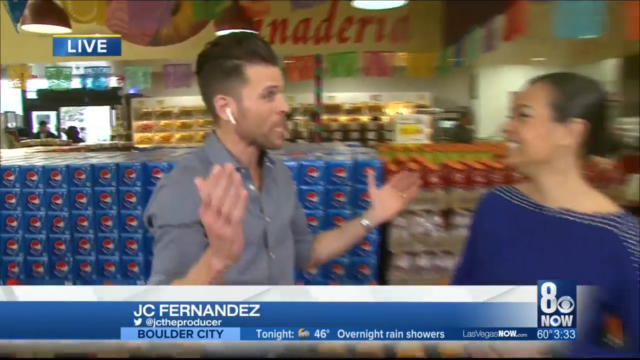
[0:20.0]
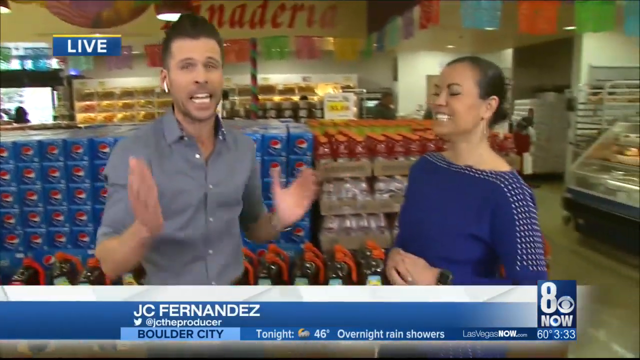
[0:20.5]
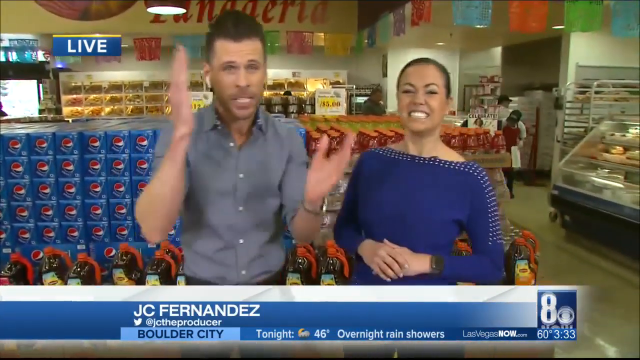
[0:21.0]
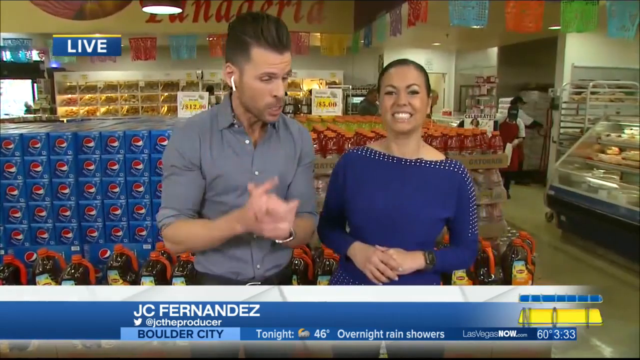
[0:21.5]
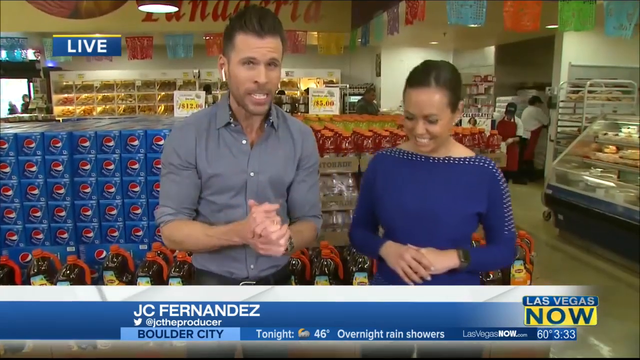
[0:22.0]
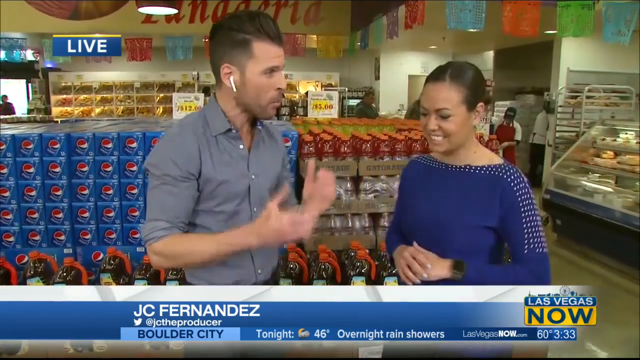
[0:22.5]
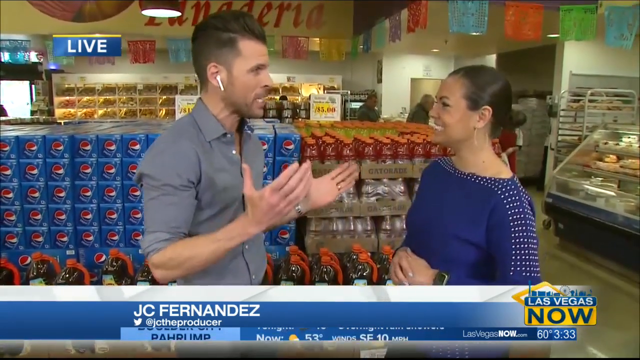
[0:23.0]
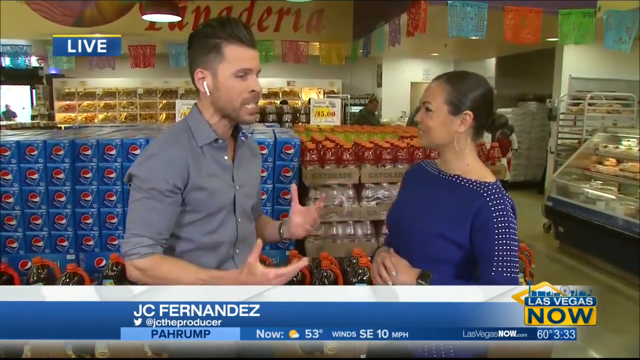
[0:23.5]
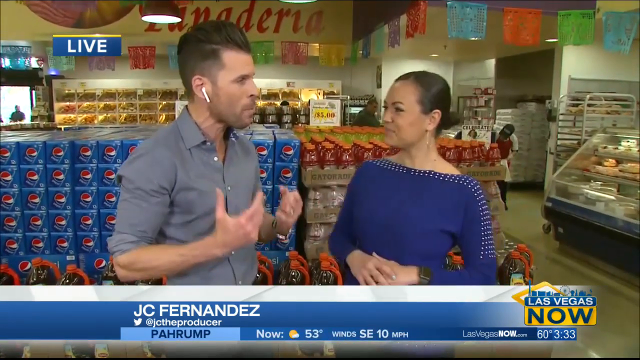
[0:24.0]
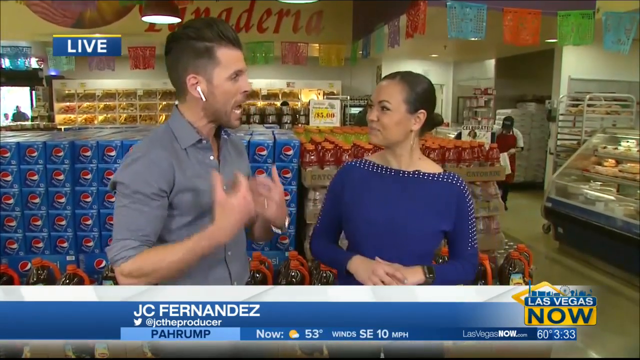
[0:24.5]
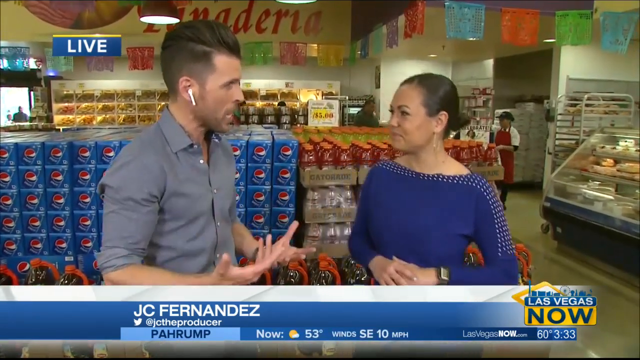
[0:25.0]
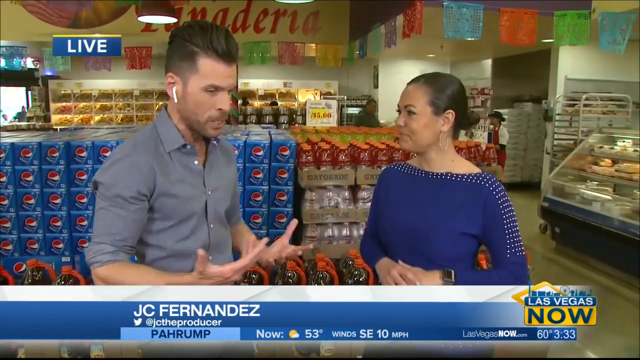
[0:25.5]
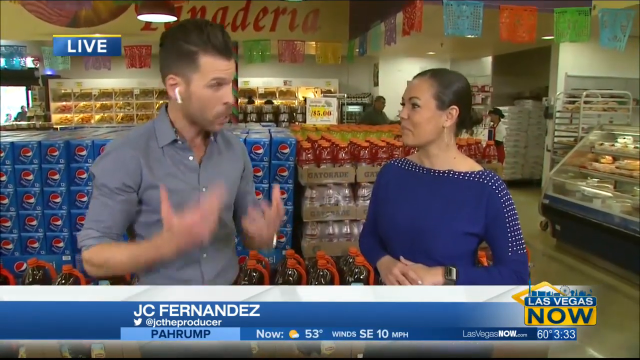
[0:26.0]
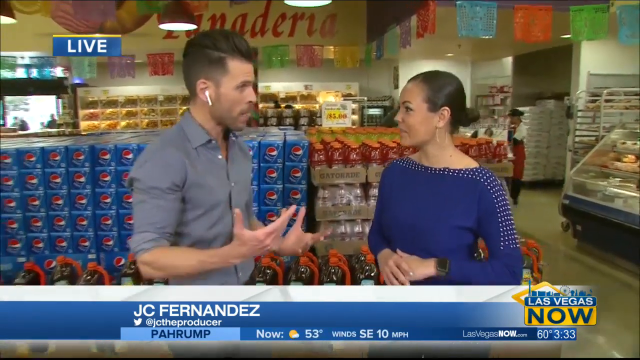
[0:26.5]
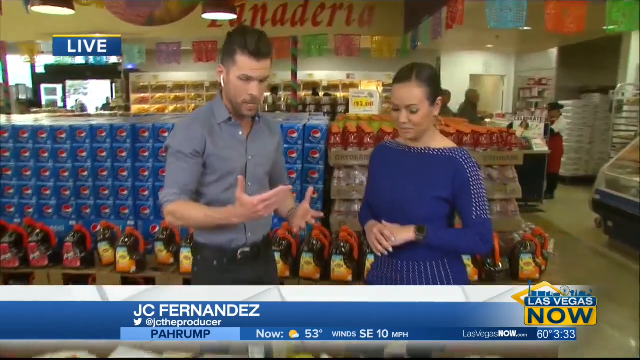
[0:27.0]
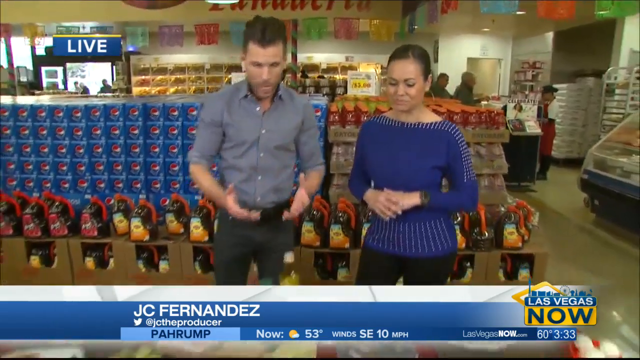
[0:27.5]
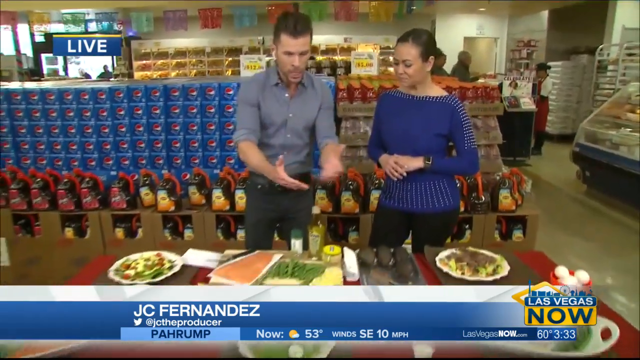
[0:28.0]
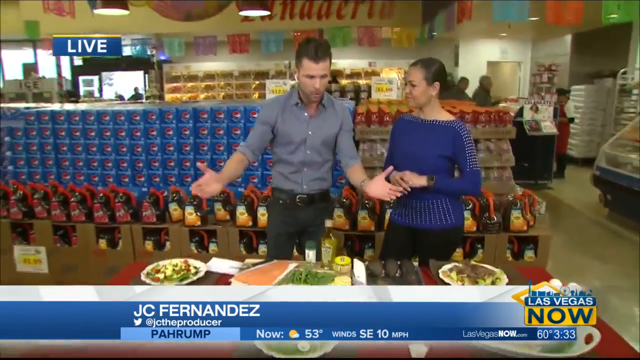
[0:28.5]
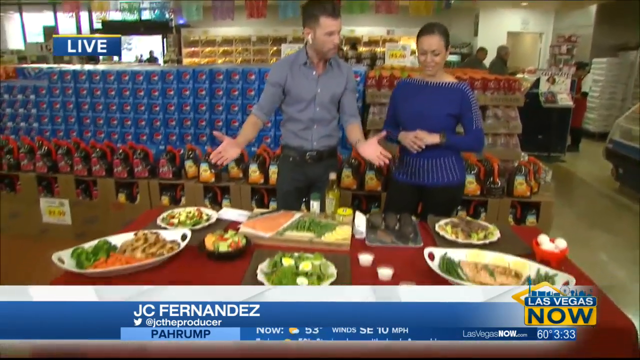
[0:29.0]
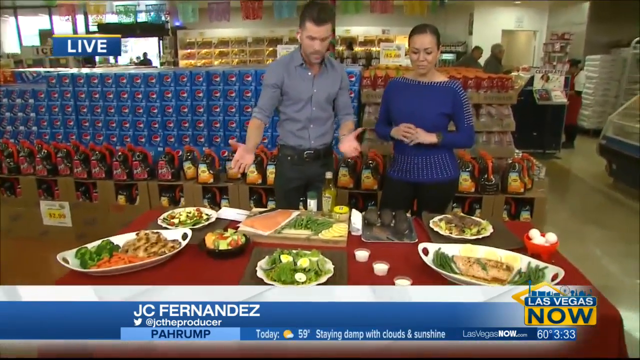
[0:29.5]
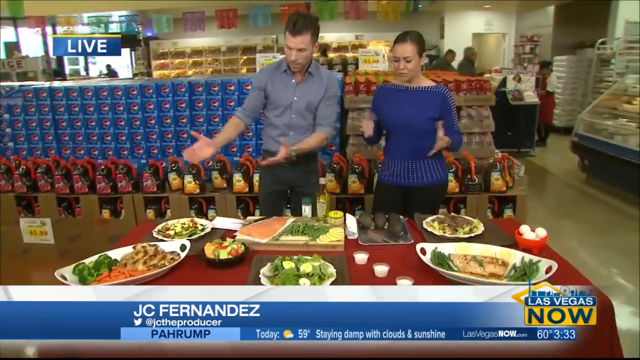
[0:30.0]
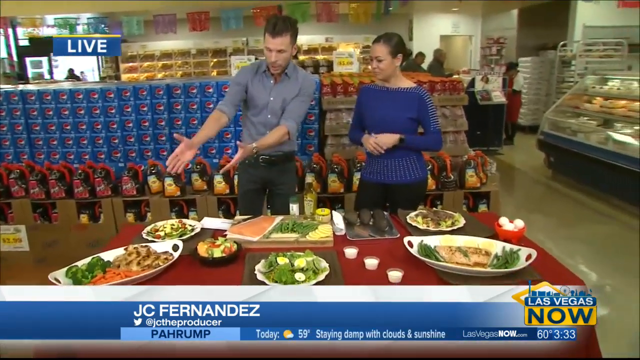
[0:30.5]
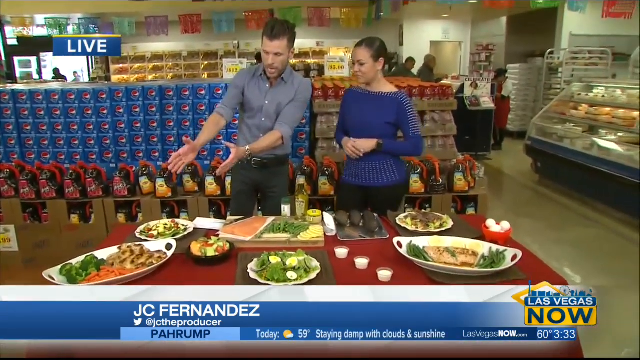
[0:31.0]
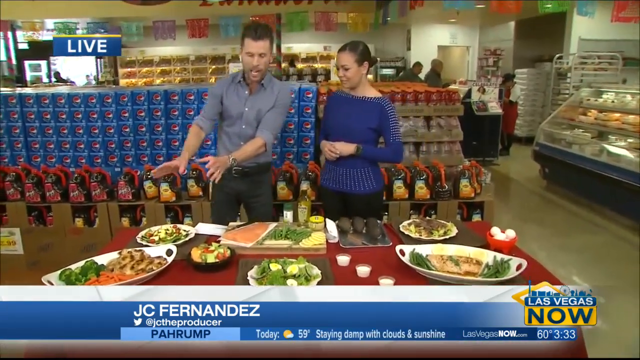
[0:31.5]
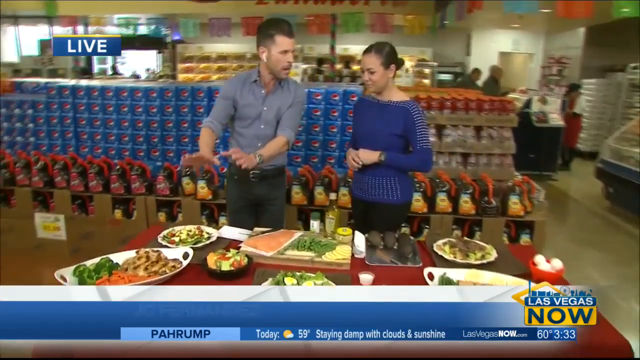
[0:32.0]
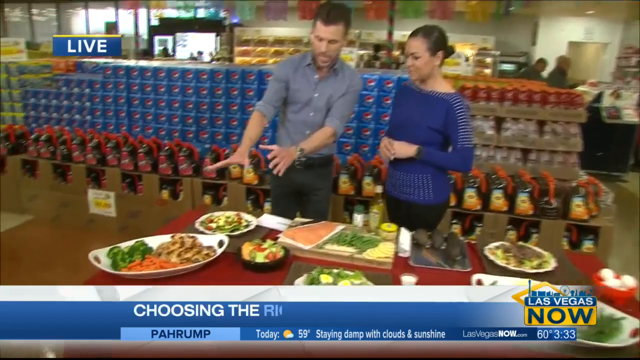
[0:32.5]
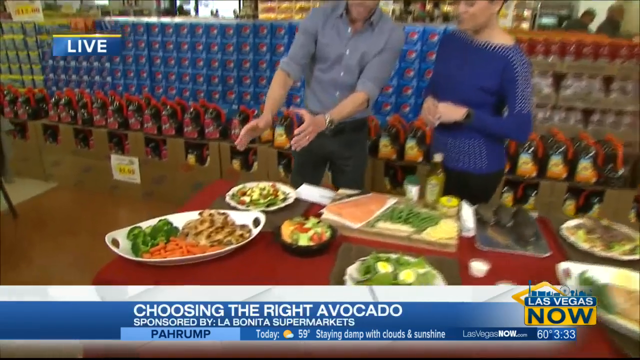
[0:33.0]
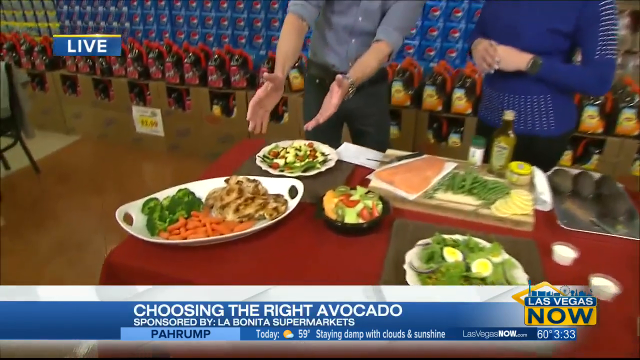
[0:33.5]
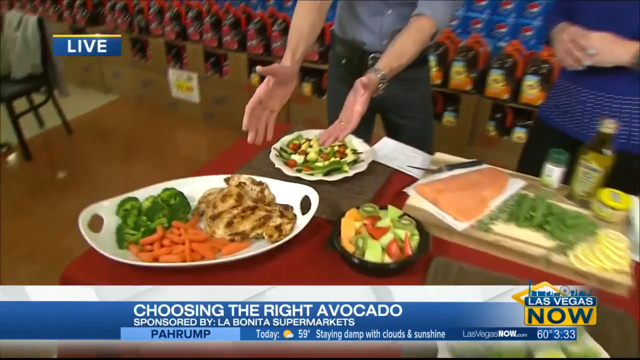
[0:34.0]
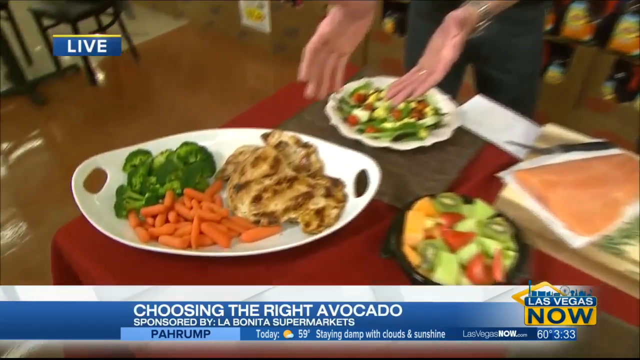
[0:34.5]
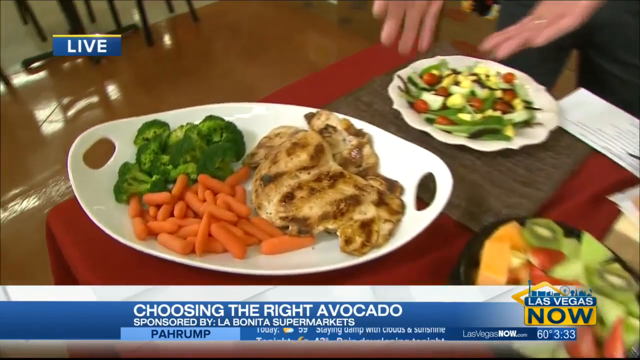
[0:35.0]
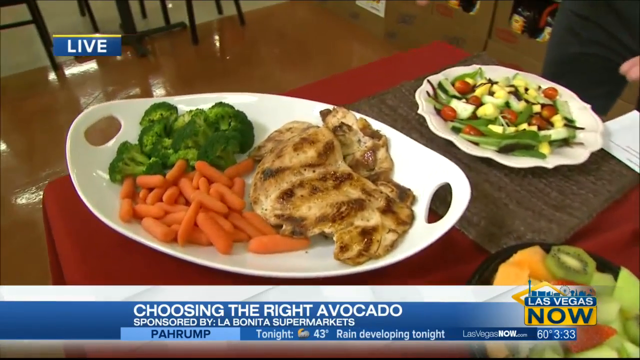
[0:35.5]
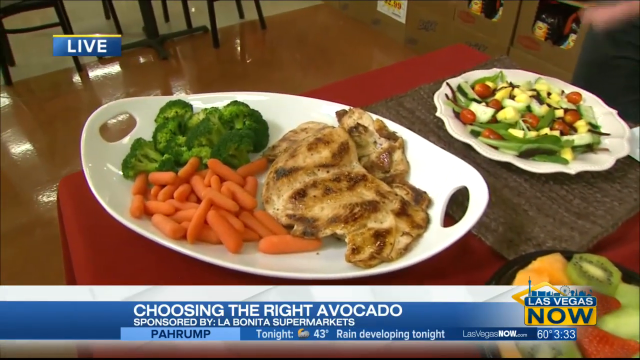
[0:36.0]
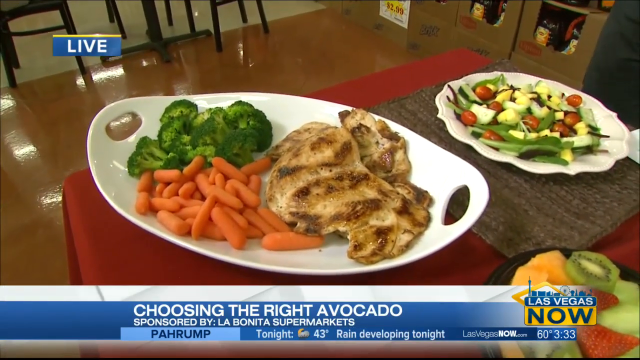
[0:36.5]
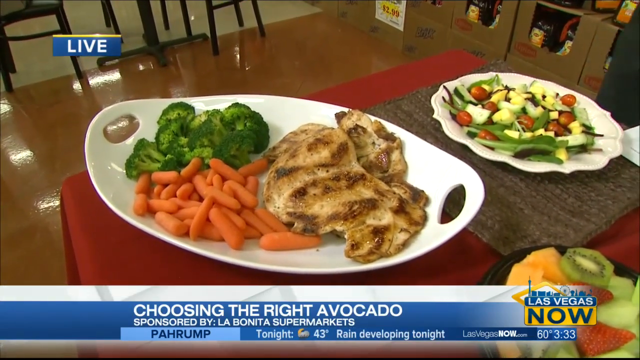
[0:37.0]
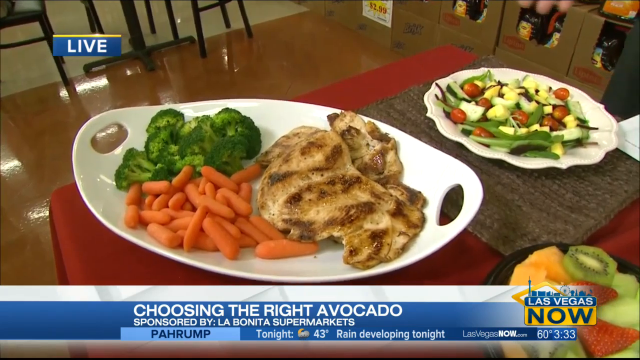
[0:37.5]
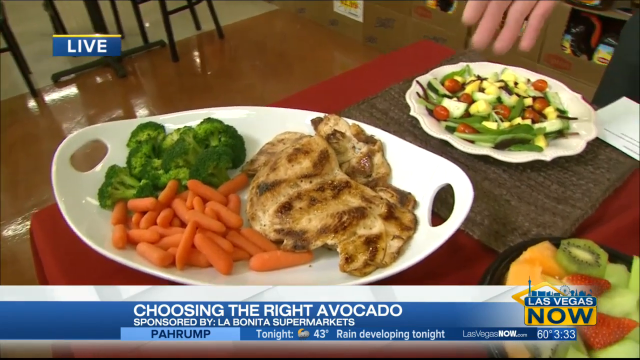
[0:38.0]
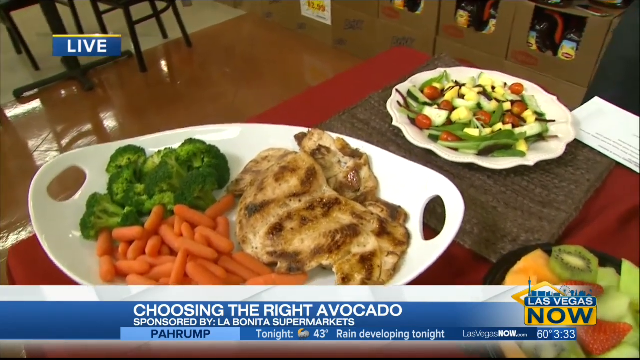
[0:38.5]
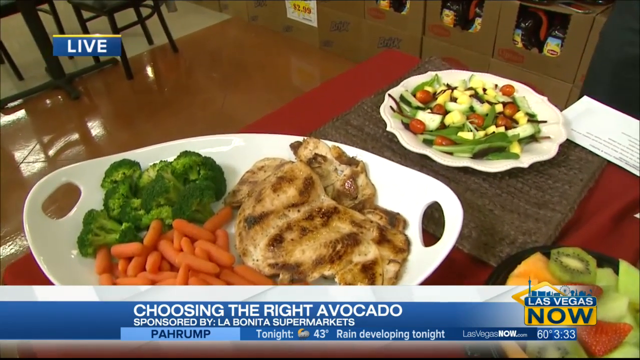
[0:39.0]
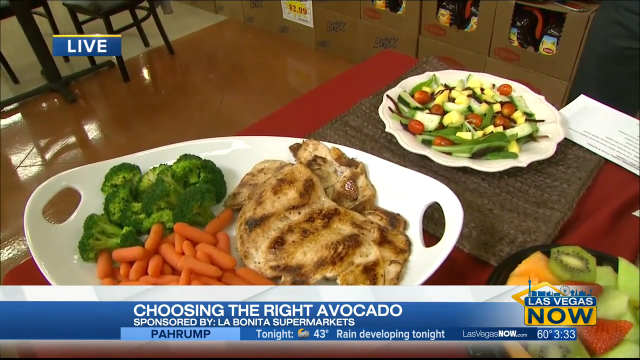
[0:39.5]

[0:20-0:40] After a cut, a man with ear pods in his ear and a gray shirt turns to talk to a lady in a blue top. The man is JC Fernandez, and he appears to be inside a grocery store, with Pepsis, Gatorade bottles and a bakery section behind him. Workers are visible in the background next to the bakery section. Then the two are at a table with a lot of food and ingredients; he wears a gray shirt and black pants, and she wears a blue top and black pants. On-screen text reads "choosing the right avocado," and the segment is sponsored by LA Bonita Supermarkets. The table holds different avocados, grilled chicken, broccoli, carrots and other healthy food, and a little salad plate is shown.